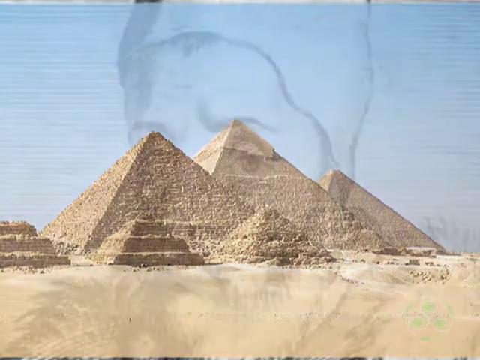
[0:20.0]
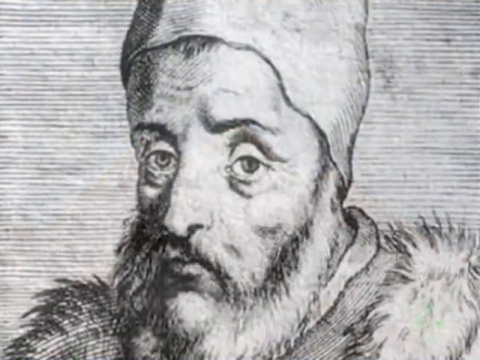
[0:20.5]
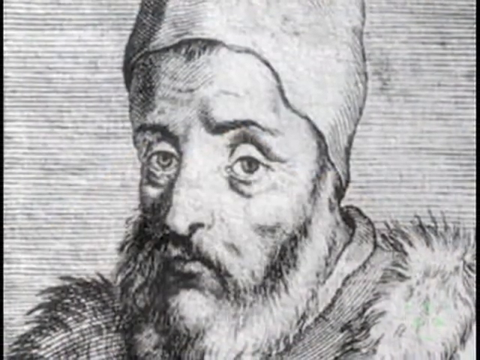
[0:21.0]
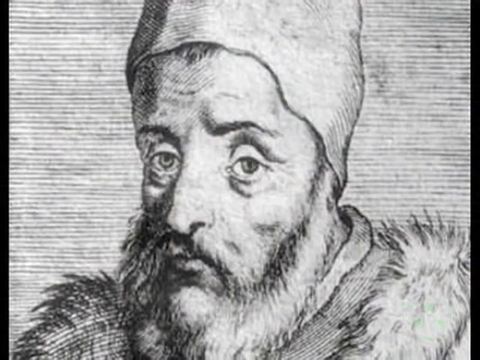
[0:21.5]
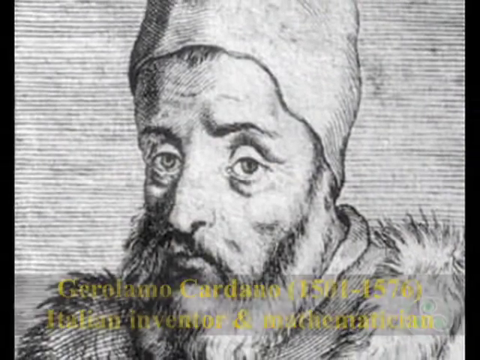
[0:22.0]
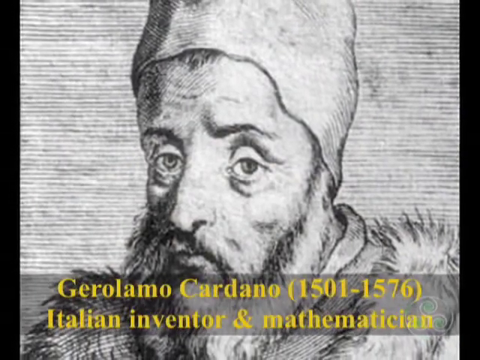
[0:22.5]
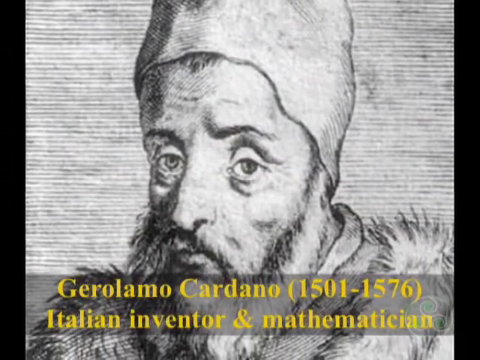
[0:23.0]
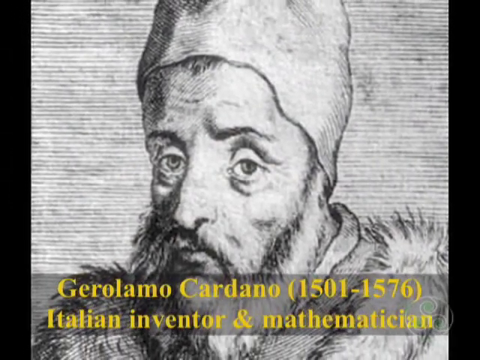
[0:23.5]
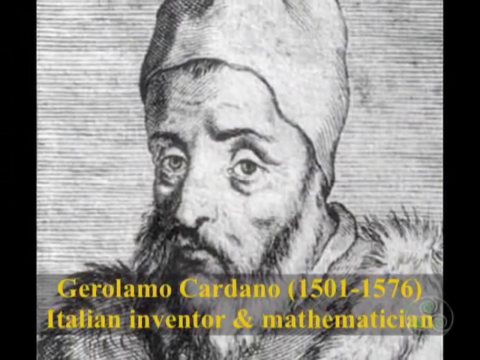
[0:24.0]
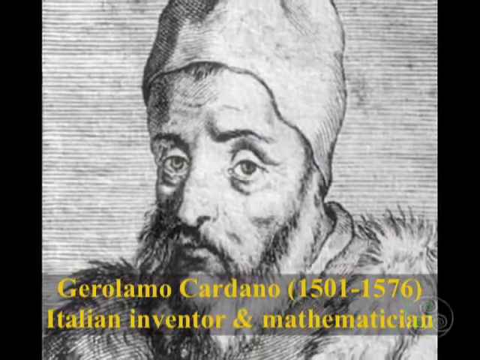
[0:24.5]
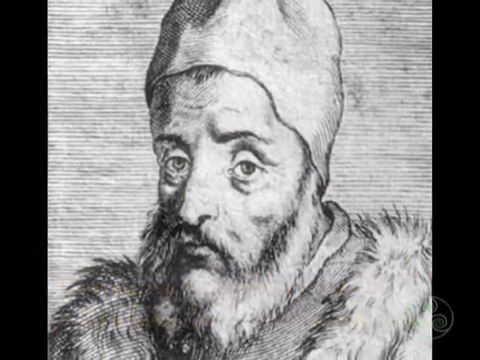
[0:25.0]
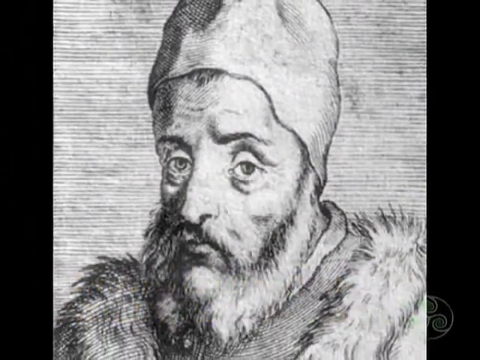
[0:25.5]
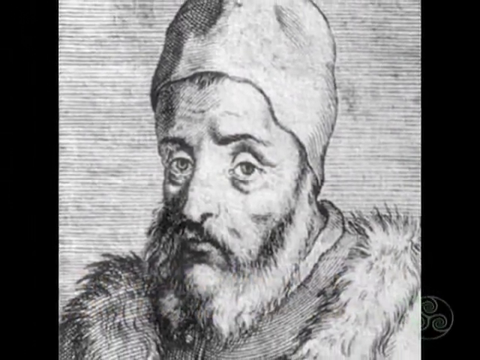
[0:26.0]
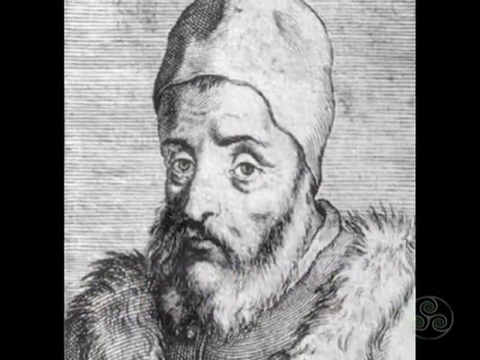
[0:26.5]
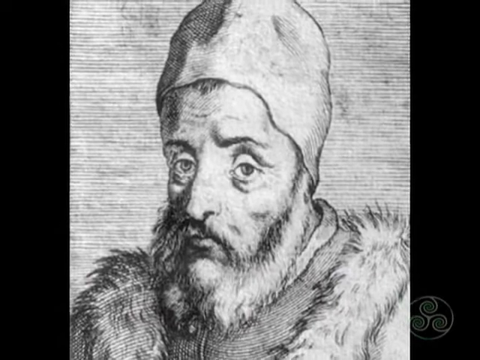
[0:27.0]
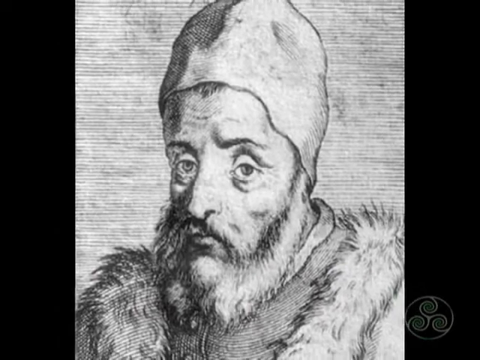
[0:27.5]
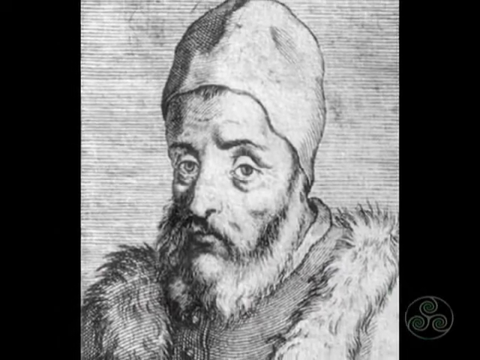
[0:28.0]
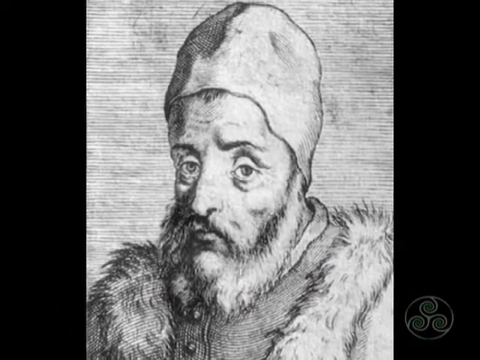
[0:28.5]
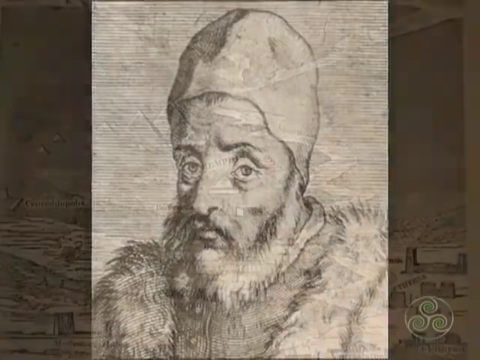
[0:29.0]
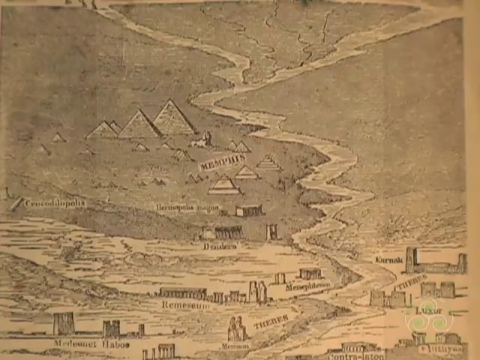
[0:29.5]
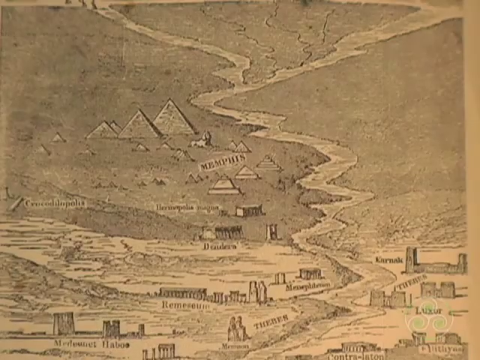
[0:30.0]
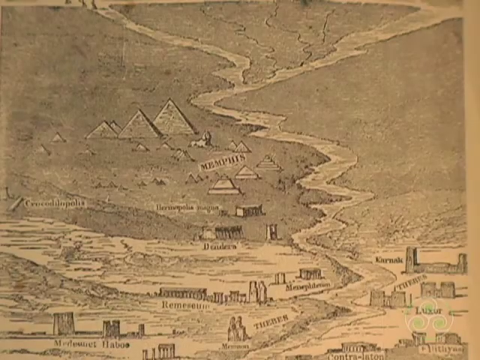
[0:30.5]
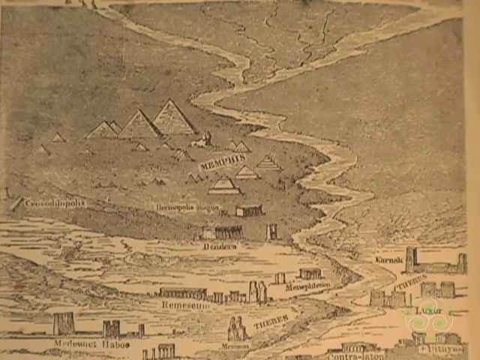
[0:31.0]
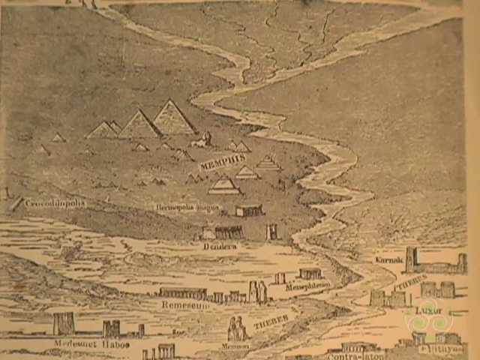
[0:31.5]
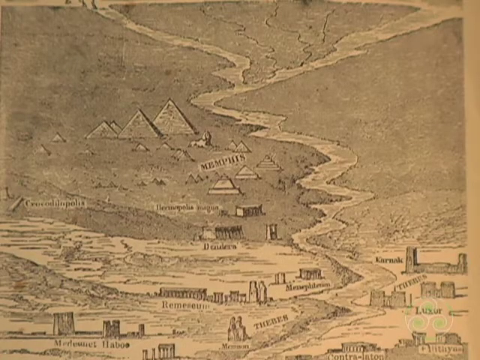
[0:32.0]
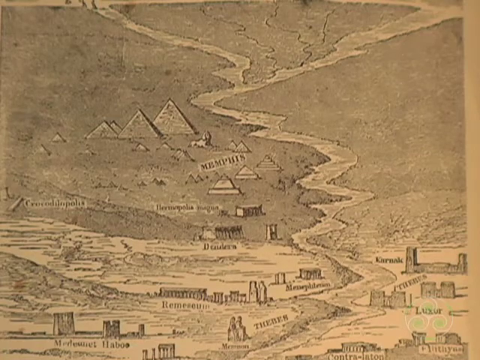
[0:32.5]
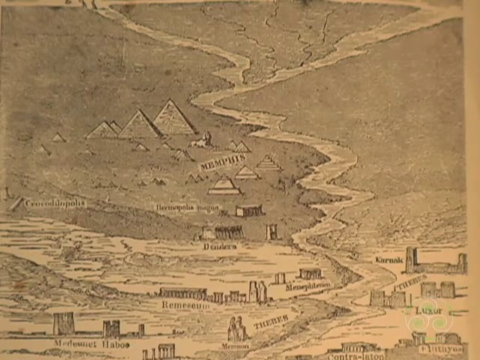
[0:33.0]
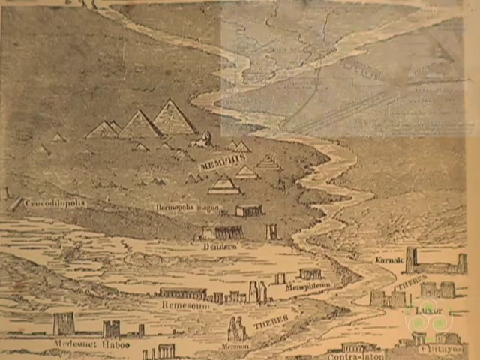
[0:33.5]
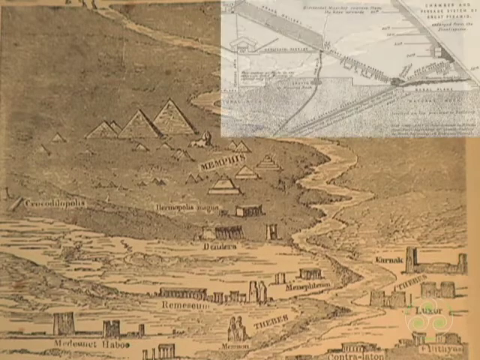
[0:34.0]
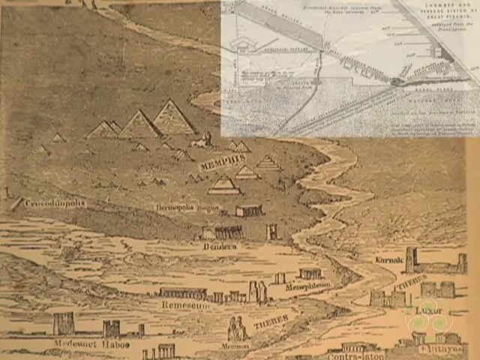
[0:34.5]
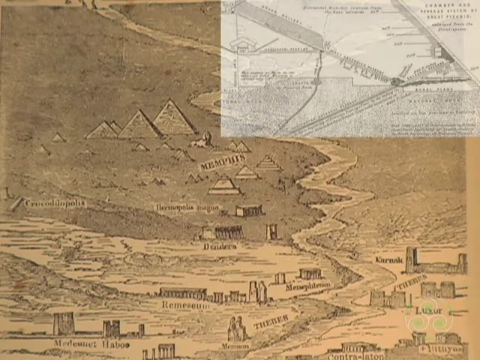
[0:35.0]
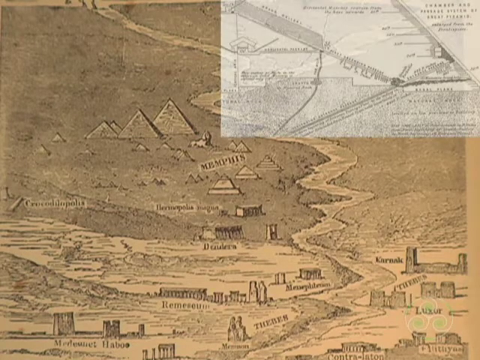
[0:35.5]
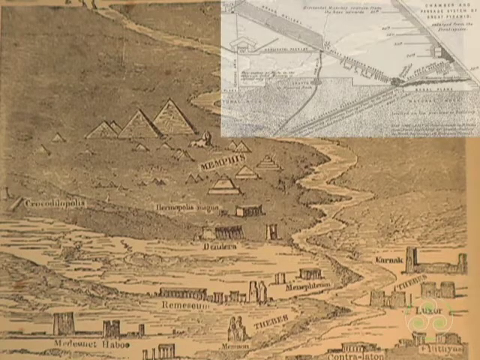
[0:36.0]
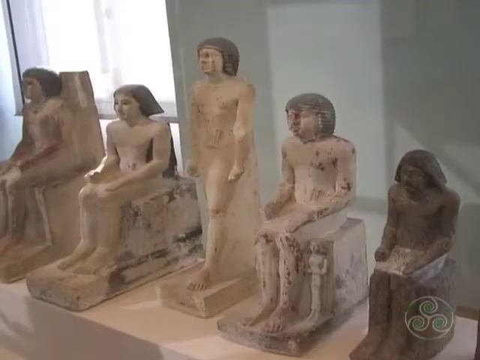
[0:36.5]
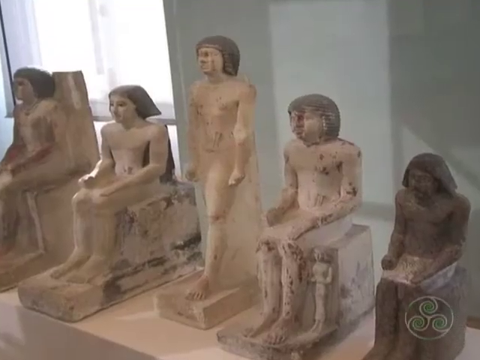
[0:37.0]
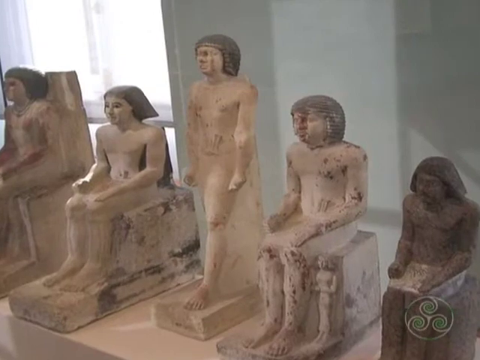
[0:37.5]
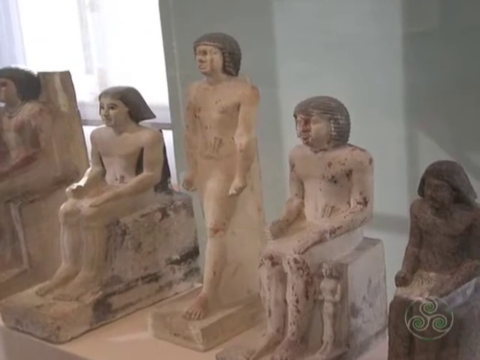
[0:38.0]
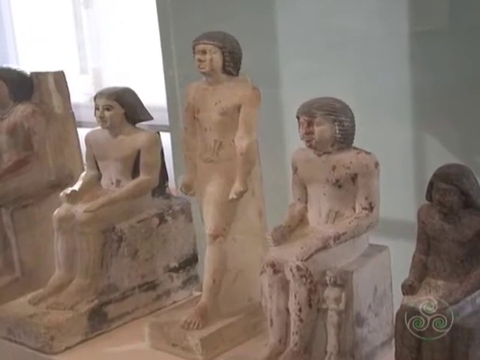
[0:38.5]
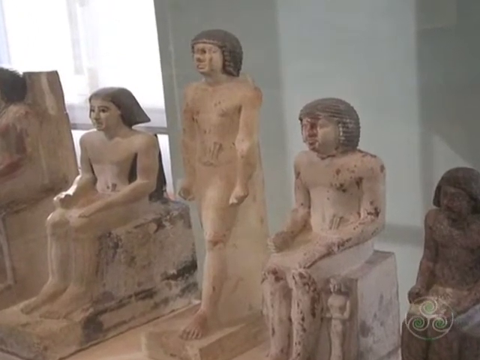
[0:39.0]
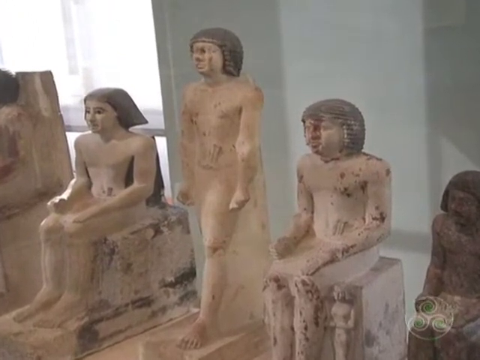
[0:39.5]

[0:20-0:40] Many pyramids appear in the background. A man is shown in an area with a river, with some pyramids off to the side and Memphis off to the side as well. Statues are shown in a very green environment, and a person is visible in the background. The pyramids, of various sizes, are grouped together in a region of the desert, arranged in an orderly fashion.